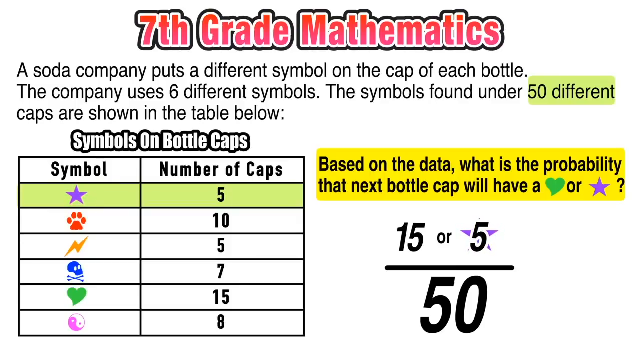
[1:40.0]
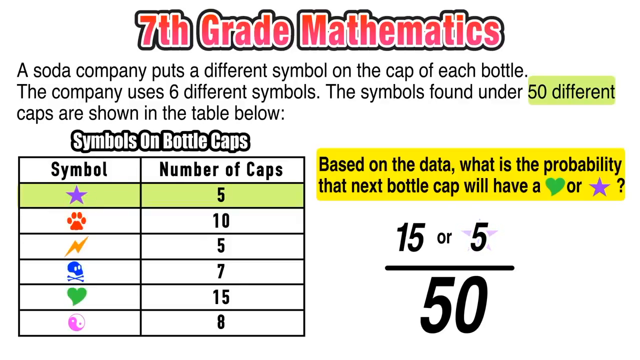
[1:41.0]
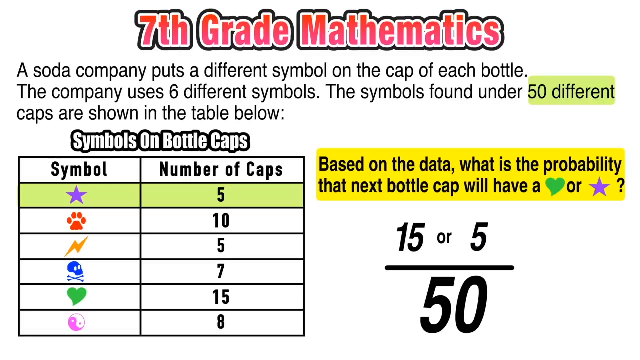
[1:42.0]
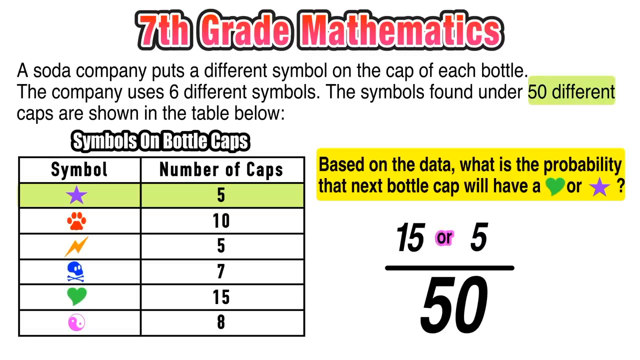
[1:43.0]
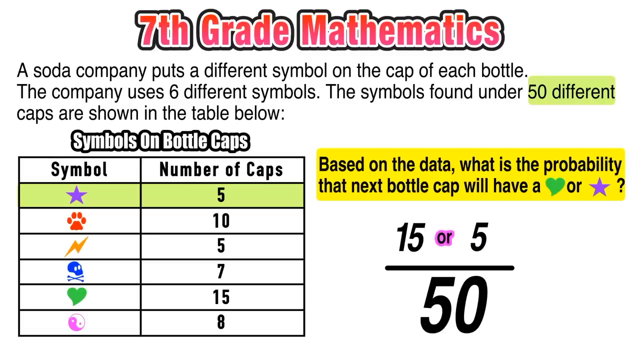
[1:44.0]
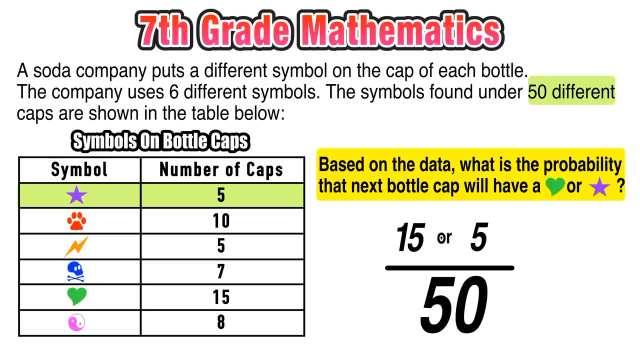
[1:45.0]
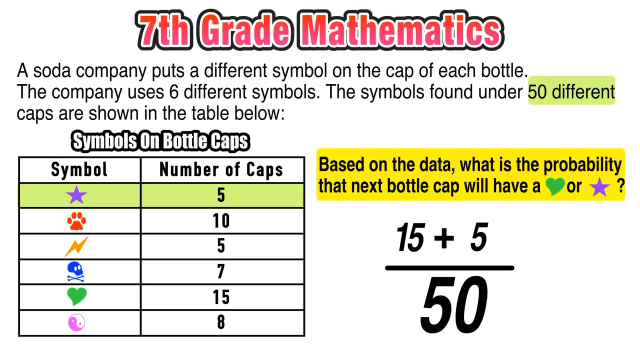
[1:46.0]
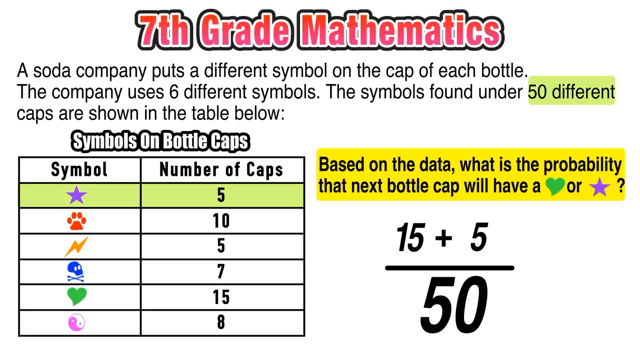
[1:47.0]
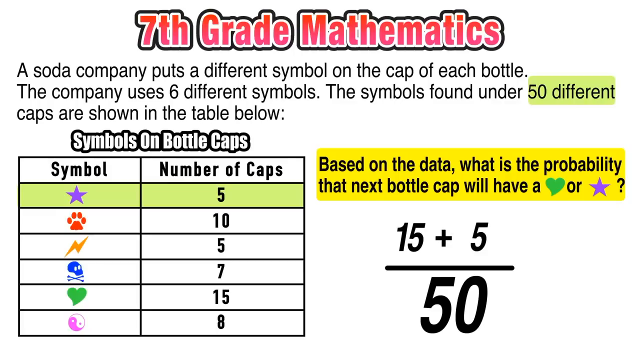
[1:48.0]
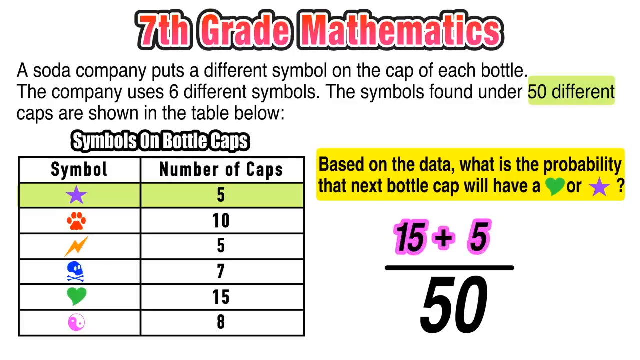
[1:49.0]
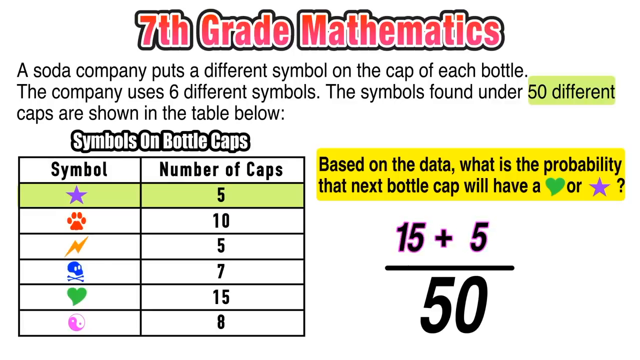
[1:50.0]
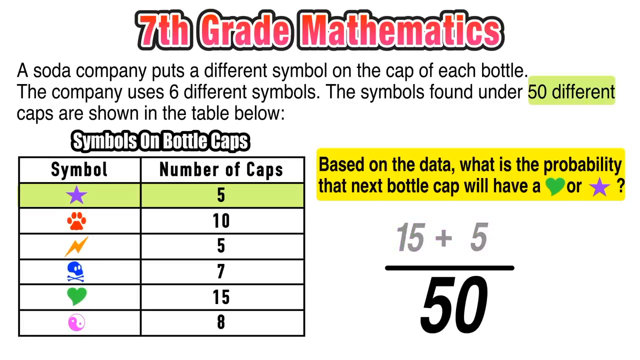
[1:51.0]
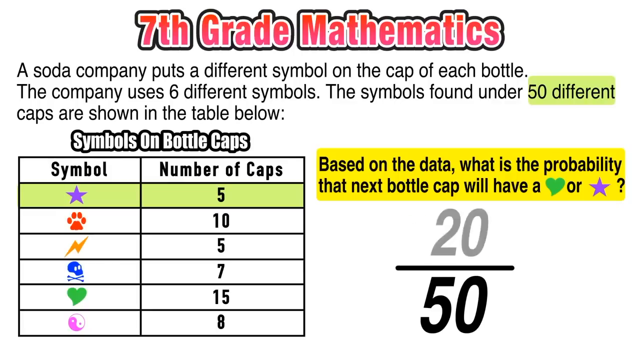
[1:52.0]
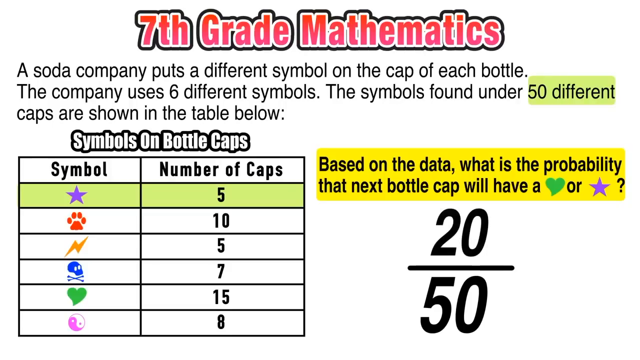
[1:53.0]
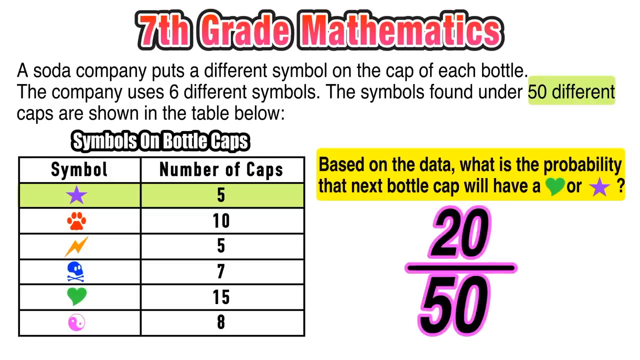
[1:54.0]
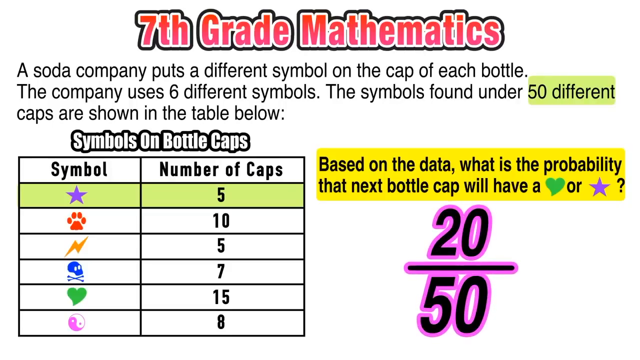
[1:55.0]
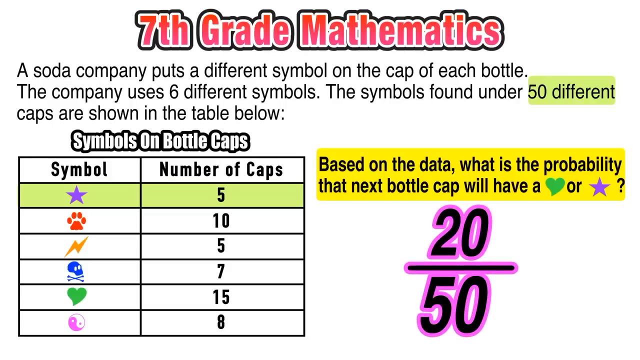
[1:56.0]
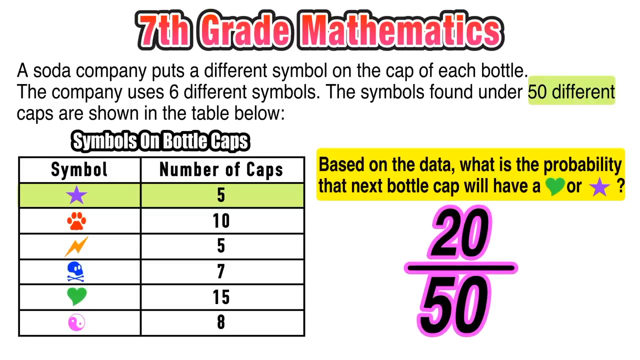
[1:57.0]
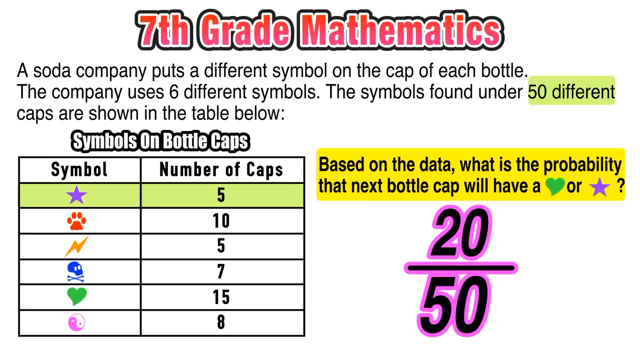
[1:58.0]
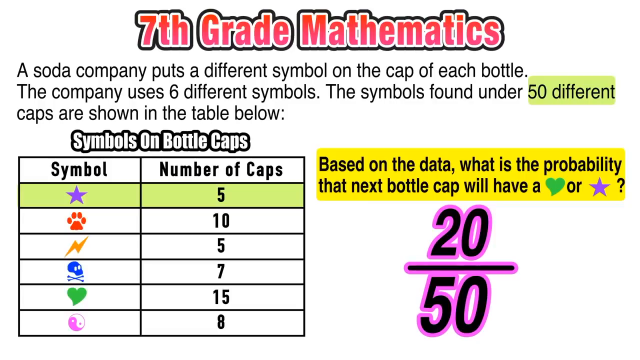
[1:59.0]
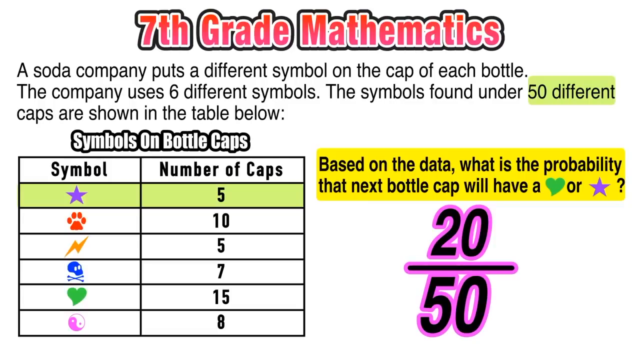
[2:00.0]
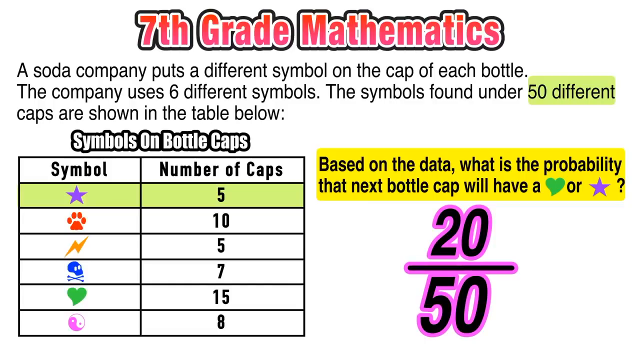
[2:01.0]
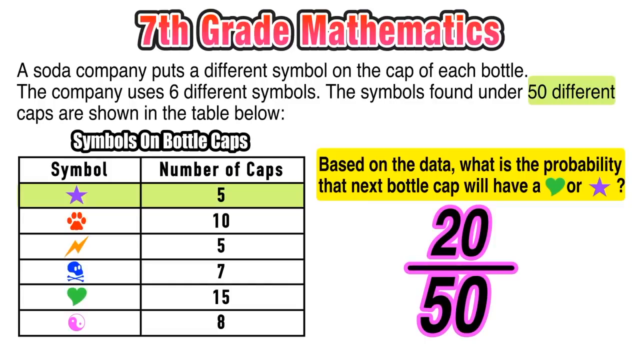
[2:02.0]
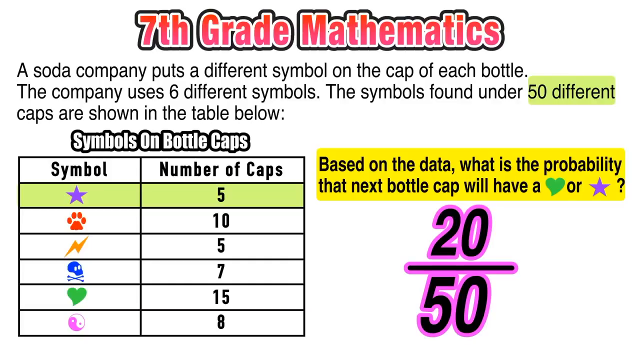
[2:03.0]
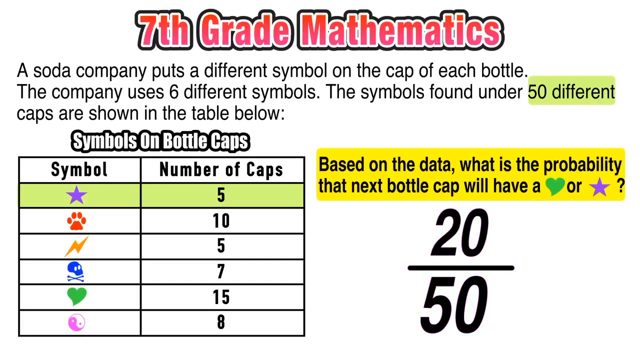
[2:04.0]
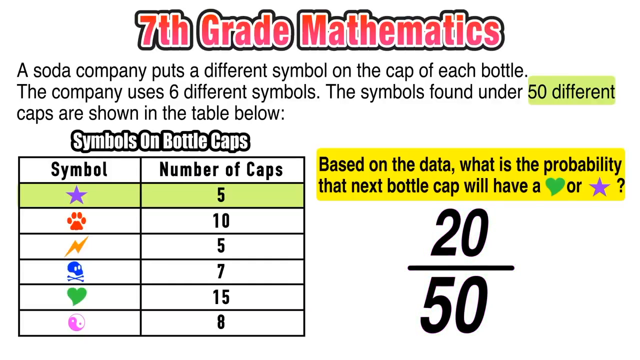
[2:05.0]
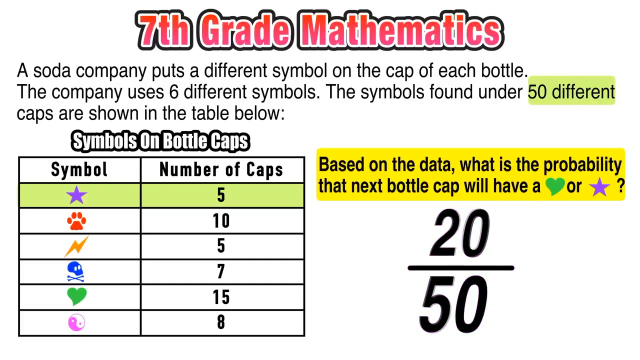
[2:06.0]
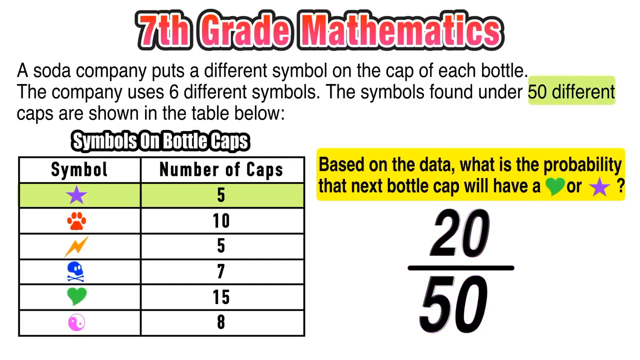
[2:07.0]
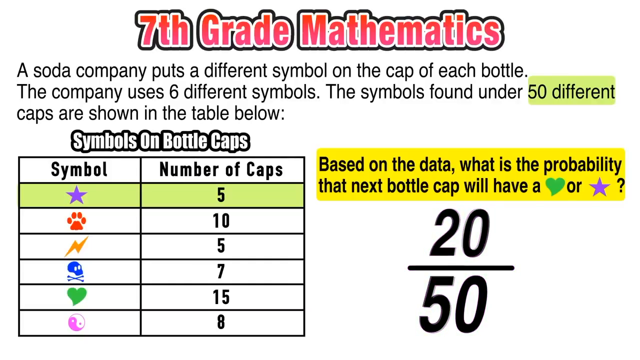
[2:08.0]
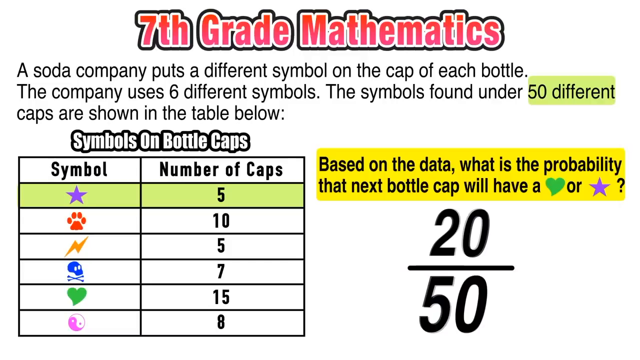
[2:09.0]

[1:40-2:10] At the bottom right of the screen, 15 over 50 is written in black. At the top there is a paragraph, and the words "50 different" at its end are highlighted in green. In the diagram of symbols and number of caps, the star is shaded in purple and its number of caps is five; that section is also highlighted in green. An O and a plus sign appear on the screen, changing color to pink, and 20 over 50 also turns pink. The background is white. The question "based on the data, what is the probability that the next bottle cap will have a heart or a star" is highlighted in yellow. The symbols on bottle caps diagram is in the bottom left corner, with "seventh grade mathematics" written at the top of the screen.